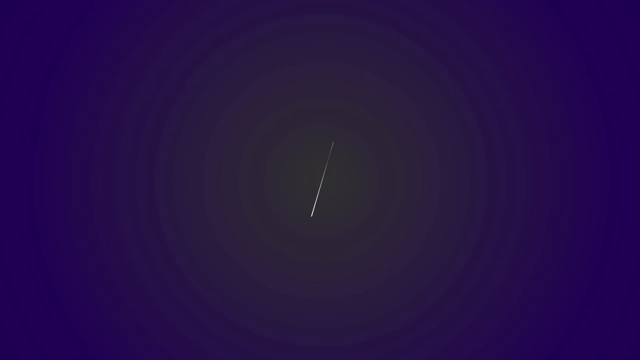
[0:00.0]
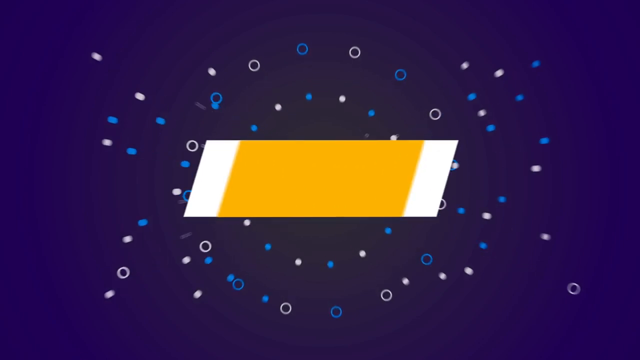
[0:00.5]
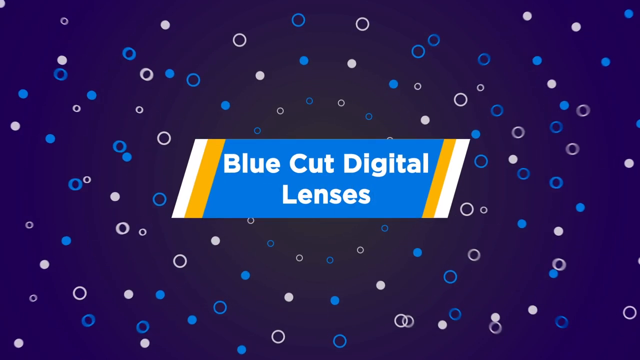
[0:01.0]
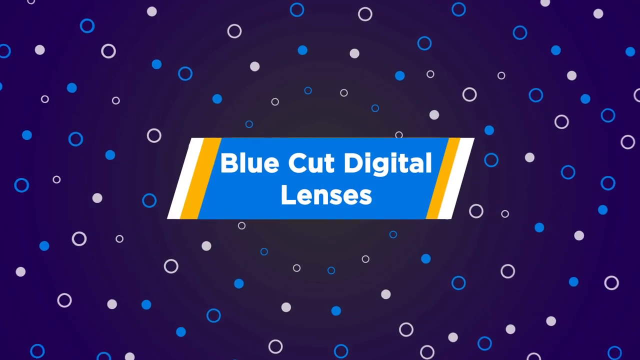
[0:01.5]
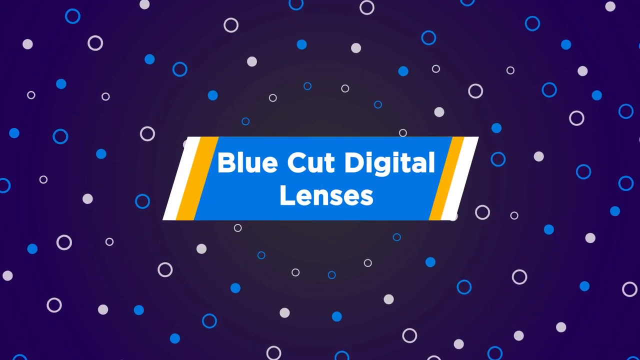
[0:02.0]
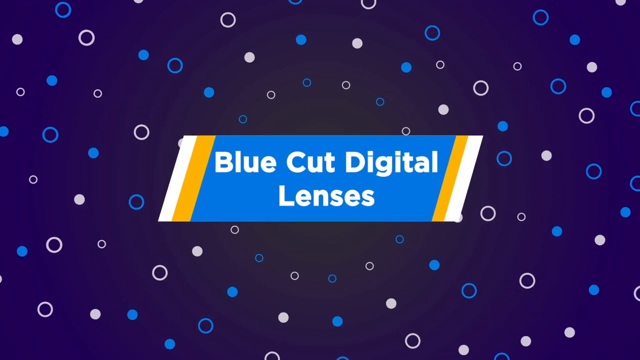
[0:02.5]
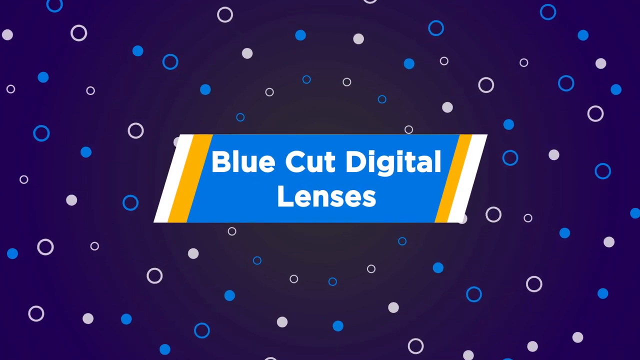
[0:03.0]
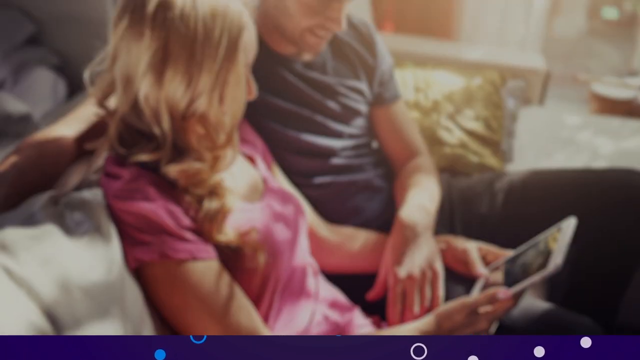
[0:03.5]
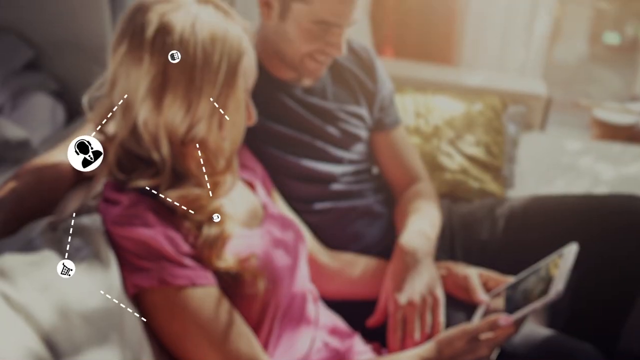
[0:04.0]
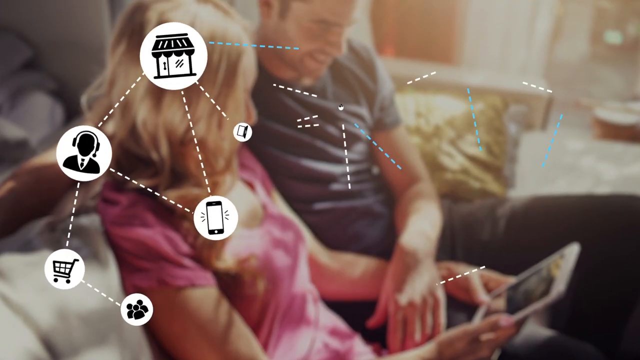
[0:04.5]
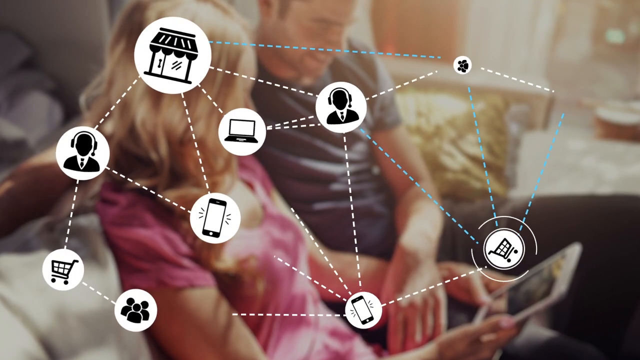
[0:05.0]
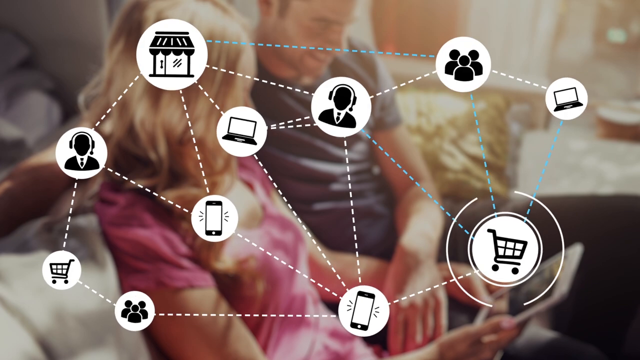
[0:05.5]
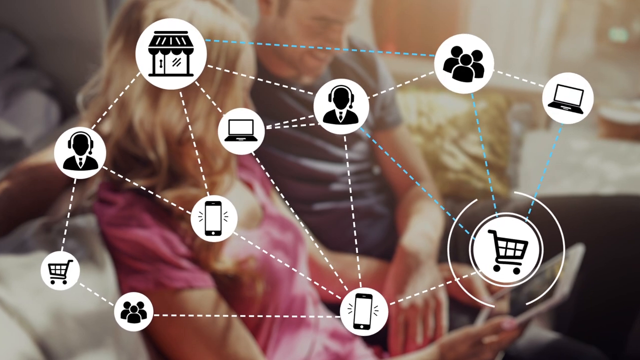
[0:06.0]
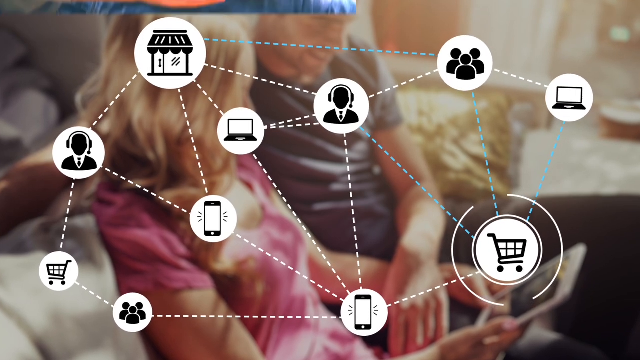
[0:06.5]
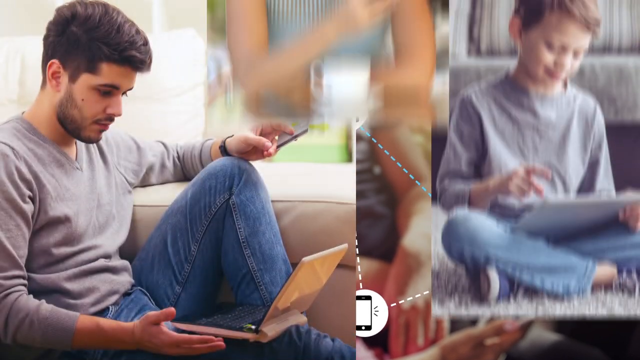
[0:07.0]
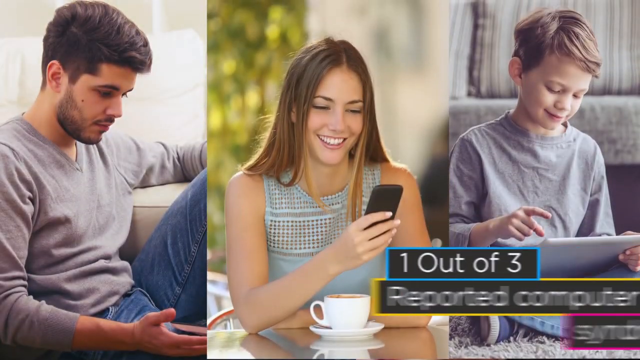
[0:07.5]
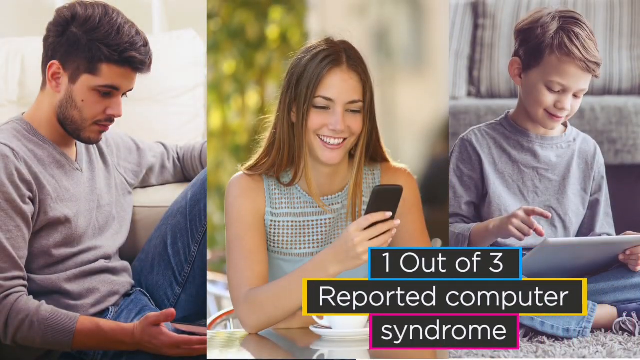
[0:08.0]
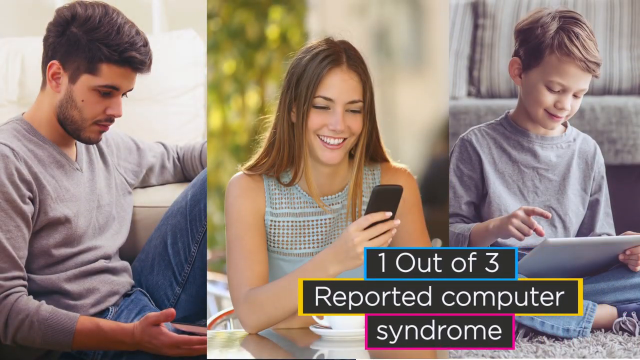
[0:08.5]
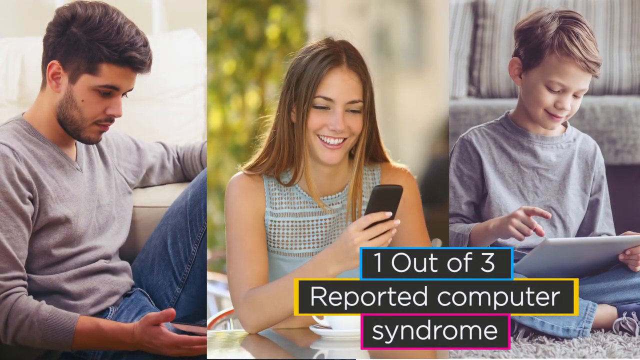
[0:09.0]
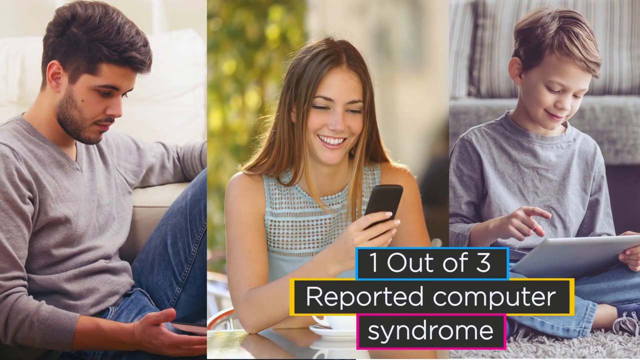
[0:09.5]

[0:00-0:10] The video opens with a special effect of blue and pink circles on a black background. A design in blue and white pops up with the text "blue cut digital lenses". The camera pans in, zooming in, and an image appears of a man sitting beside a woman on a couch, both smiling, viewed from the top. Graphical effects follow: a network of vector images in circles interconnected with lines. The vector images, in black and white, include a shopping cart, a computer, a man with headphones on, a group of three people, and two cell phones. Next, three images pop up side by side: on the left, a man on a couch; in the middle, a woman in a short-sleeved green dress smiling and looking at her cell phone; on the right, a little boy in a grey t-shirt sitting on a couch using his tablet computer.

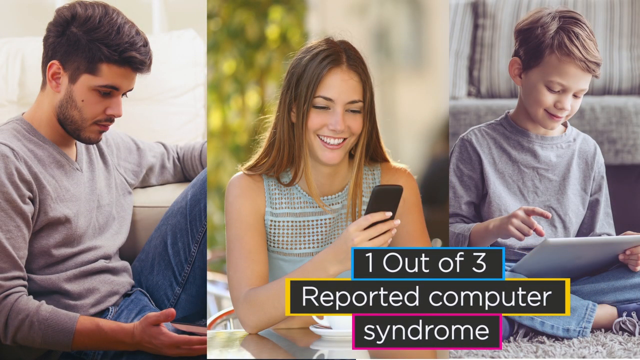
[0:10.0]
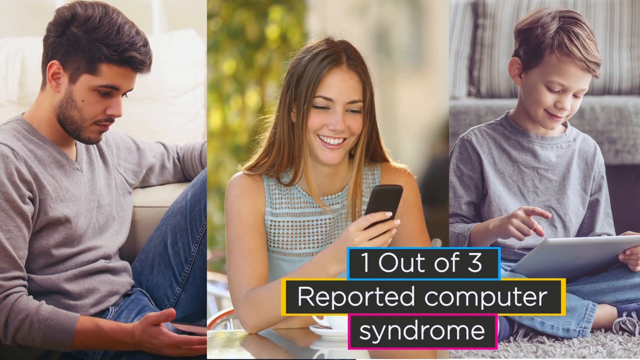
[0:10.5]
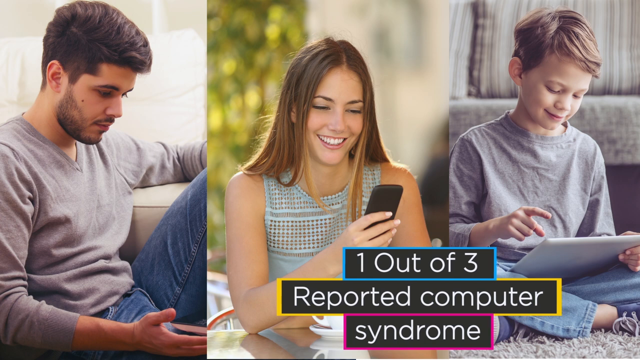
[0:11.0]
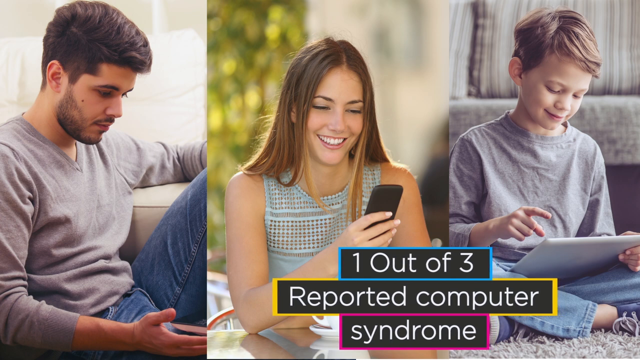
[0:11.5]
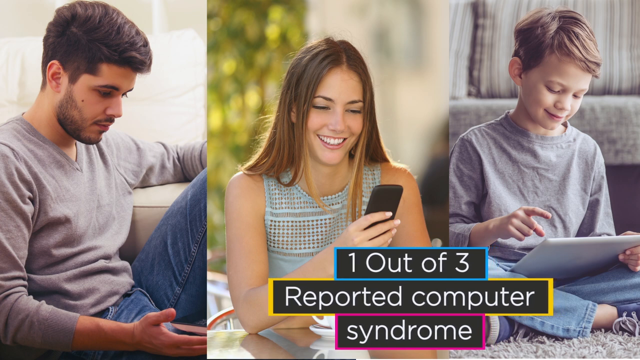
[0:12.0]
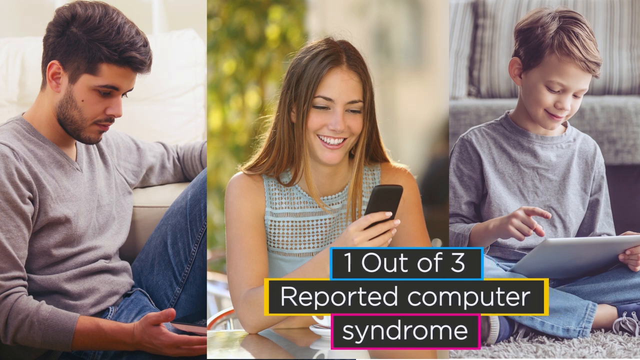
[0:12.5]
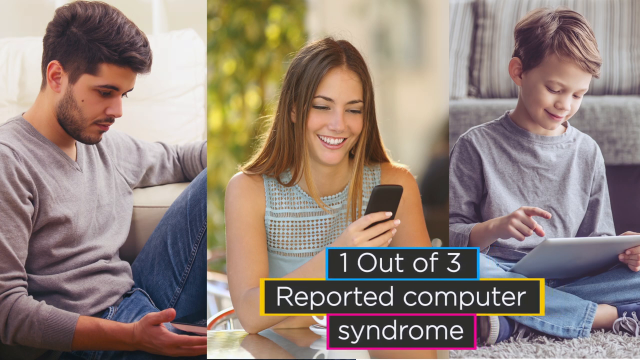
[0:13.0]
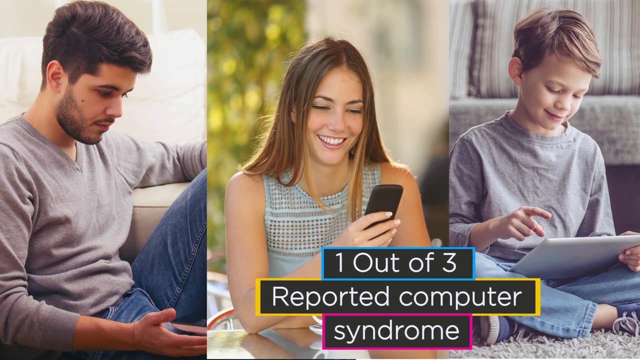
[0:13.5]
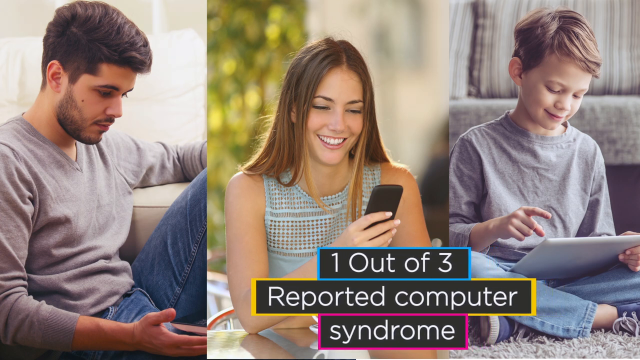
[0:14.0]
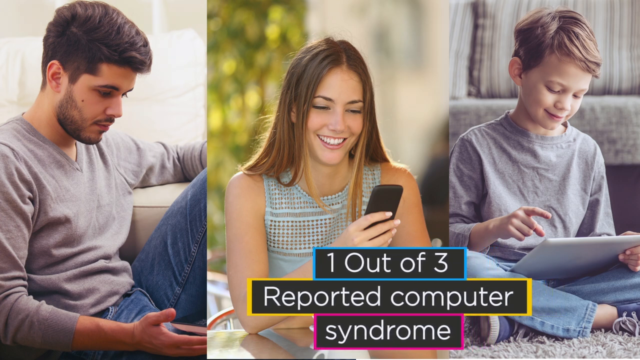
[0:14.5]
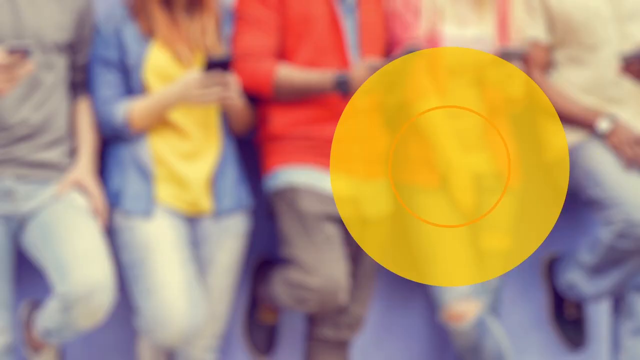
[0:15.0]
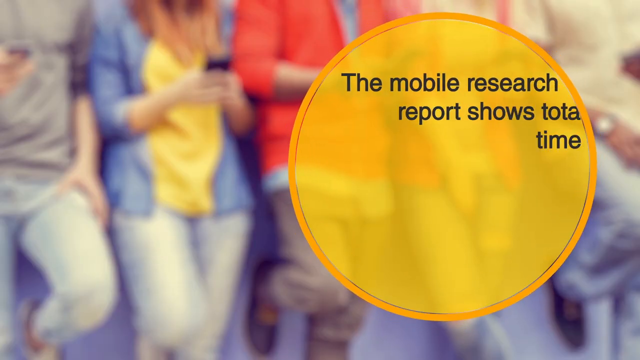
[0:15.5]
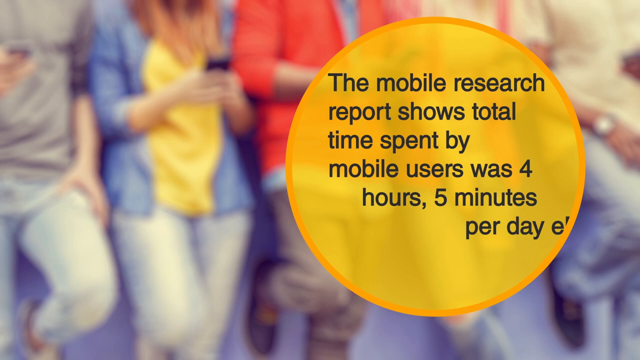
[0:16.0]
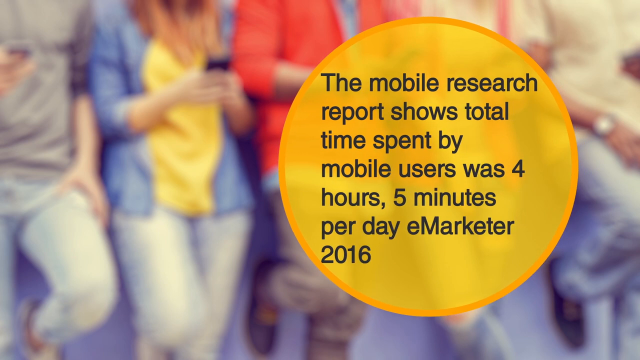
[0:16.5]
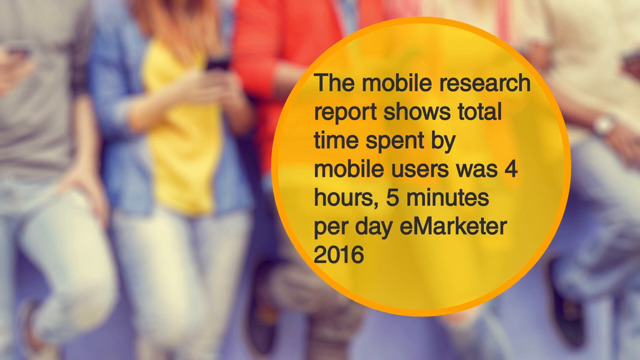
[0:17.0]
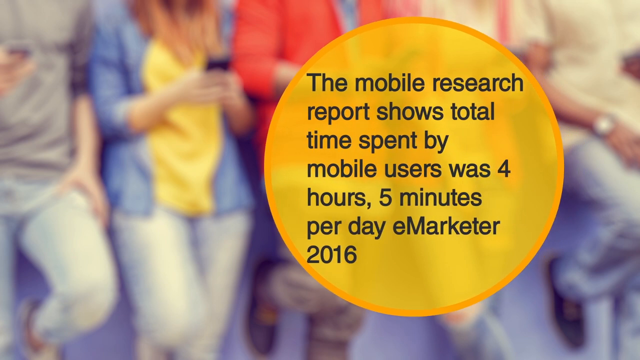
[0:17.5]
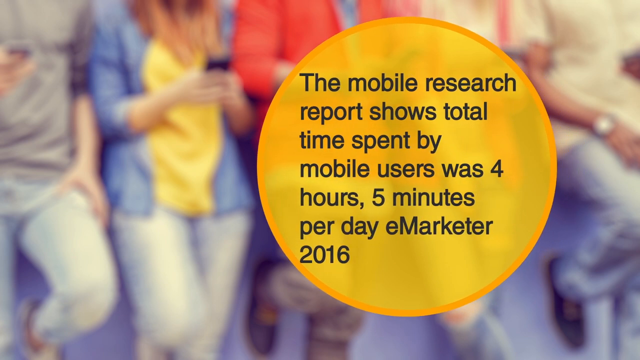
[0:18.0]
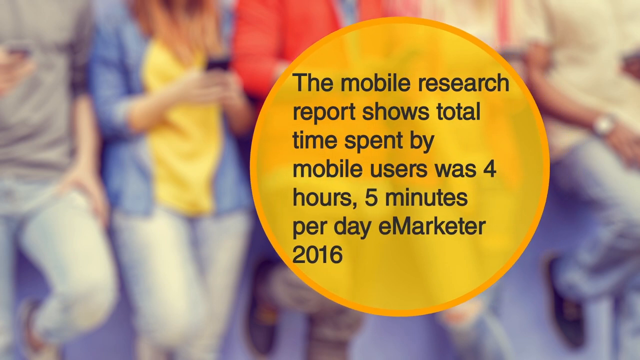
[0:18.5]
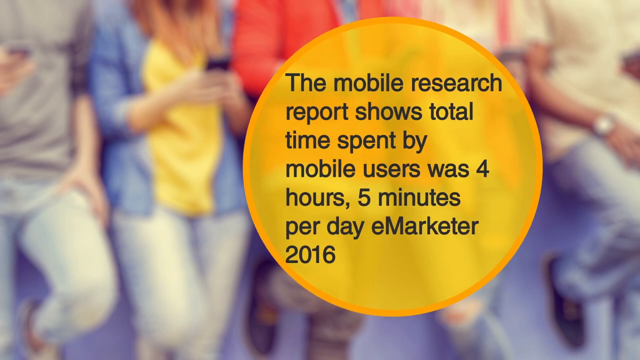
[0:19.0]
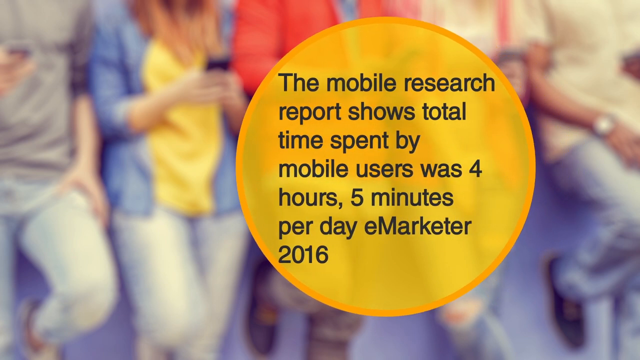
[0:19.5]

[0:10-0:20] Three images are shown side by side. The left image is a close-up side view of a man seated on a couch, wearing a gray v-neck sweater and denim jeans; his beard is close-cropped and he is looking at something in his hands. The middle image shows a woman in a sleeveless green dress, seen from head to waist, smiling as she looks at the cell phone in her hand. The image on the right shows a little boy in a gray long-sleeve sweatshirt, seated on a couch, smiling and using his tablet. Two text boxes, one on top of the other, slowly scroll in from the right side of the screen to the left, with white text reading "one out of three reported computer syndrome". Next comes a blurry image of four people side by side, visible only from the neck or chest down to the knees. One is dressed in a colorful red sweater, and one wears a yellow blouse underneath a denim shirt. A large yellow circle bears the text "the mobile research report shows total time spent by mobile users was four hours, five minutes per day. eMarketer 2016", and the circle slowly moves sideways across the screen from right to left.